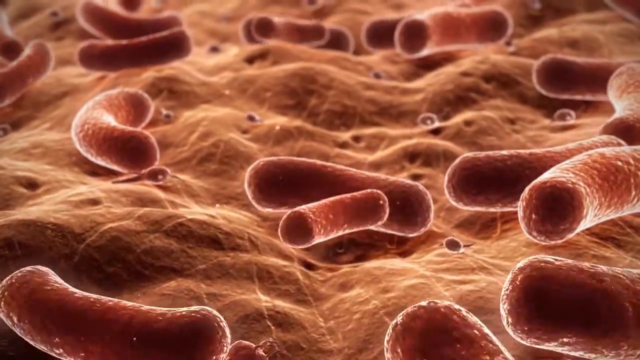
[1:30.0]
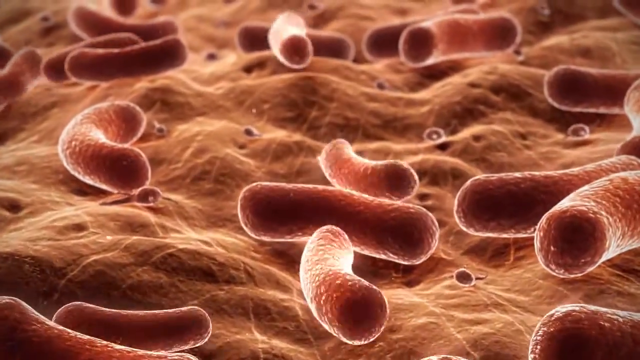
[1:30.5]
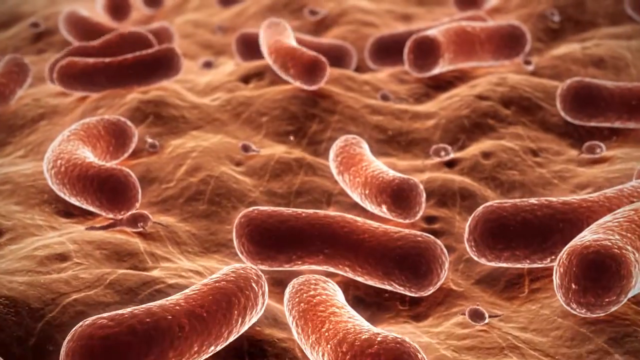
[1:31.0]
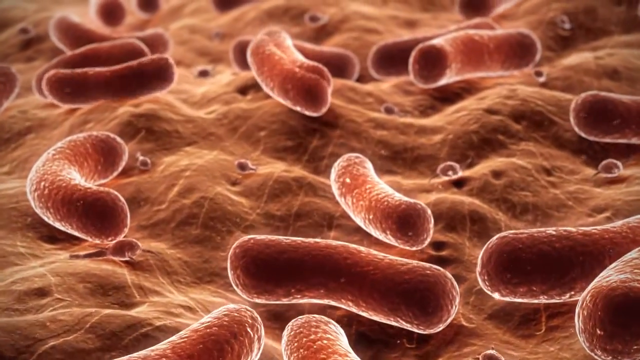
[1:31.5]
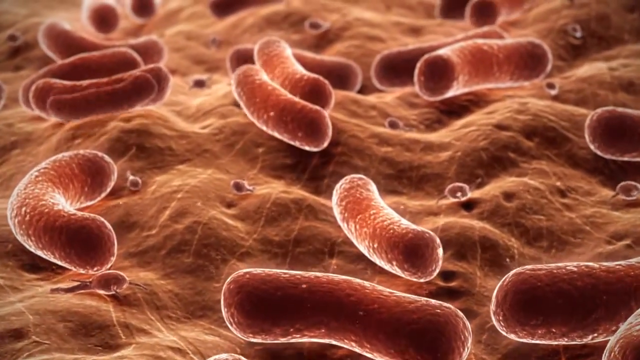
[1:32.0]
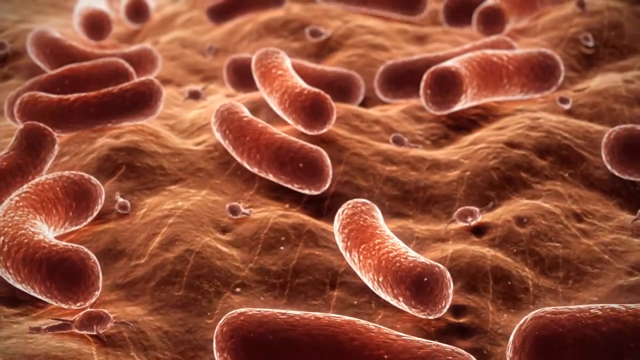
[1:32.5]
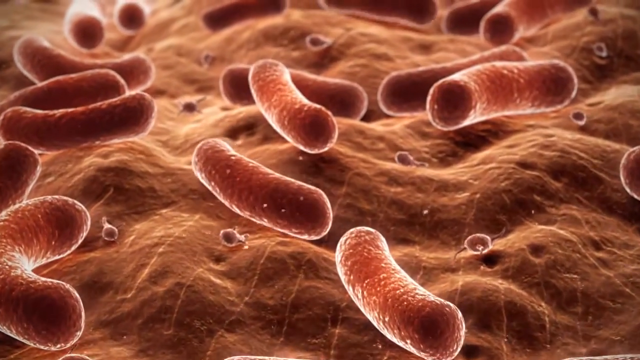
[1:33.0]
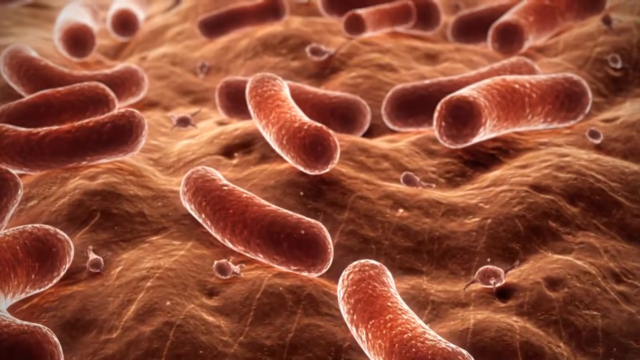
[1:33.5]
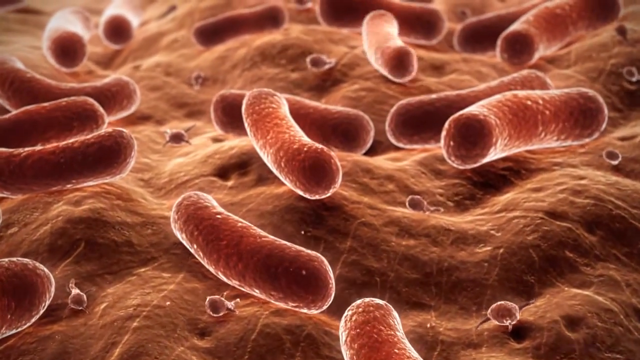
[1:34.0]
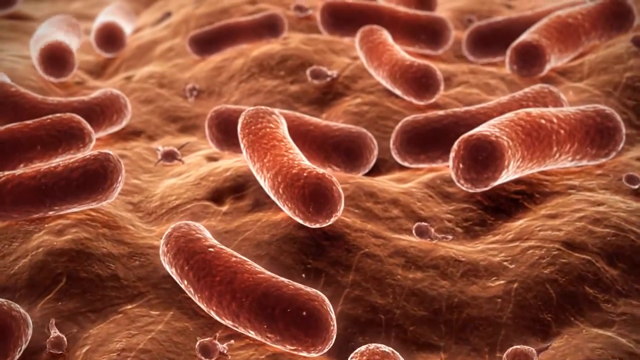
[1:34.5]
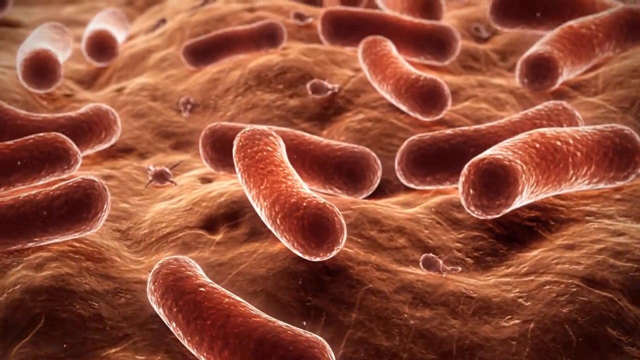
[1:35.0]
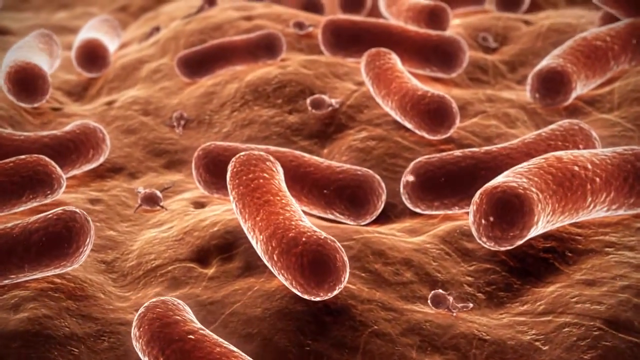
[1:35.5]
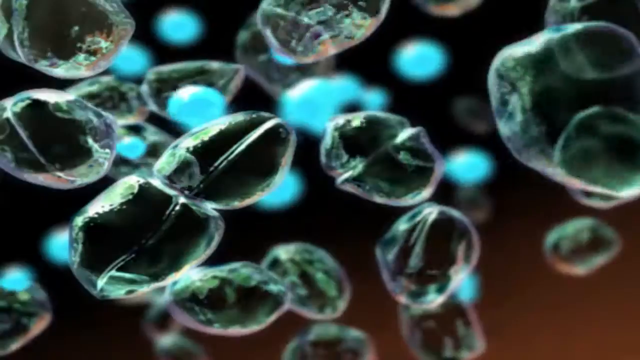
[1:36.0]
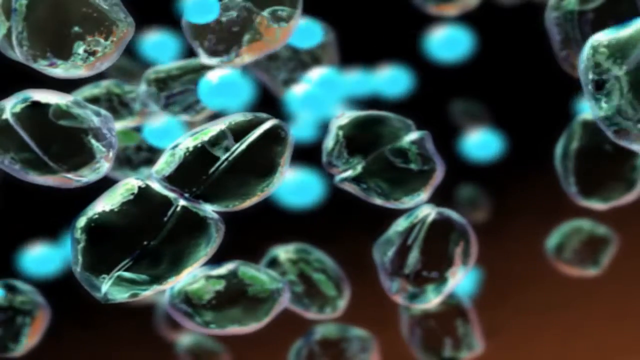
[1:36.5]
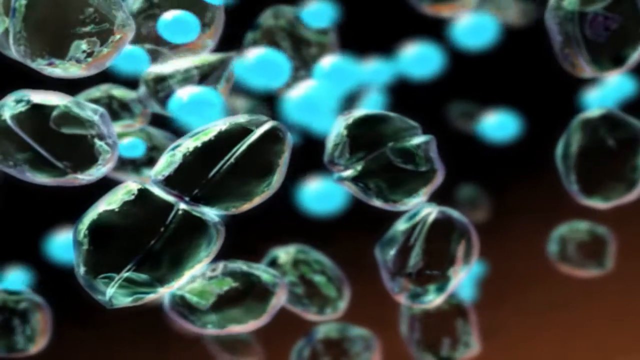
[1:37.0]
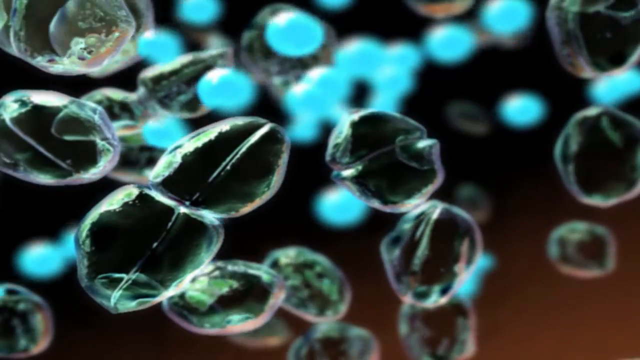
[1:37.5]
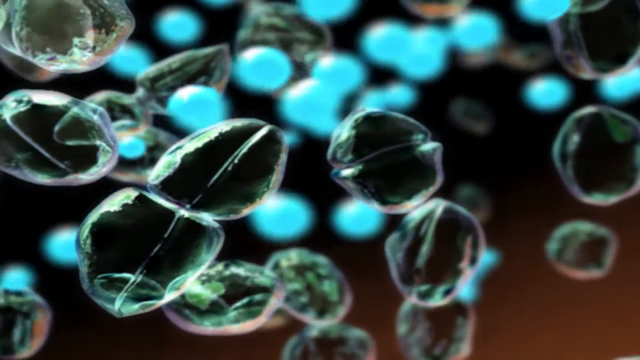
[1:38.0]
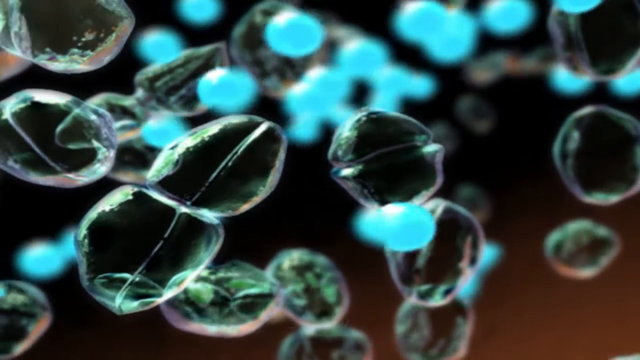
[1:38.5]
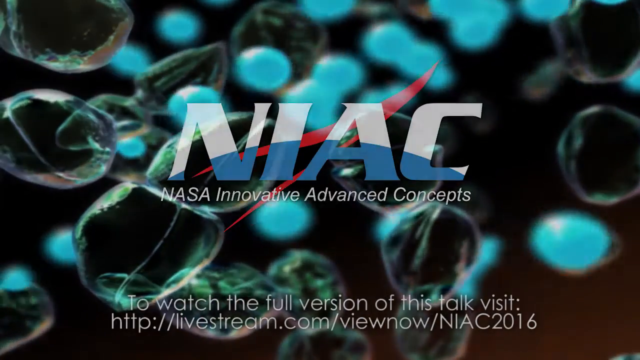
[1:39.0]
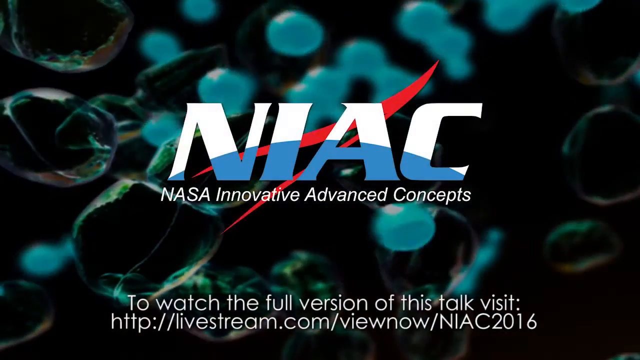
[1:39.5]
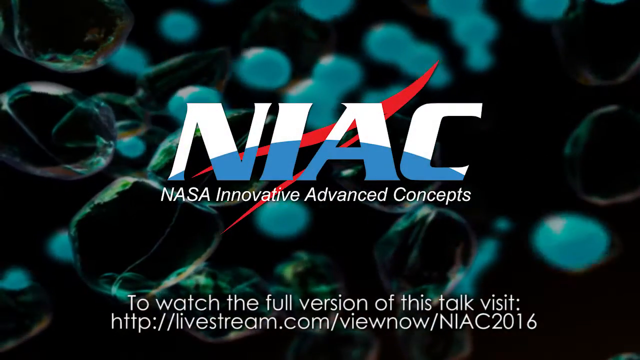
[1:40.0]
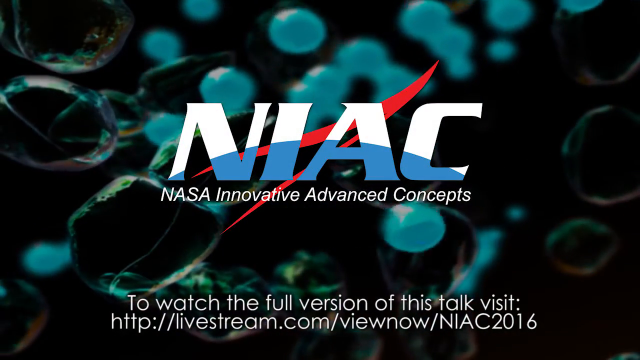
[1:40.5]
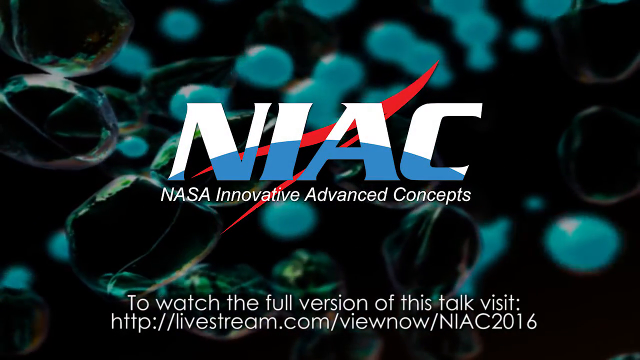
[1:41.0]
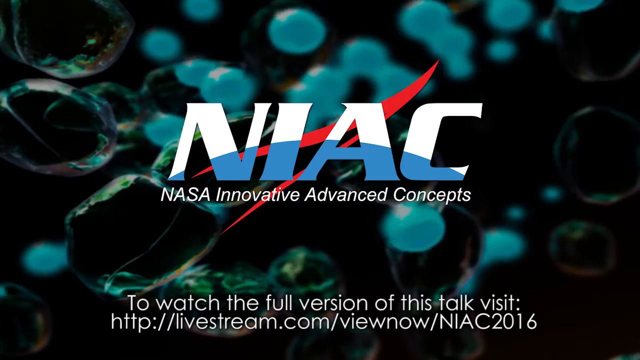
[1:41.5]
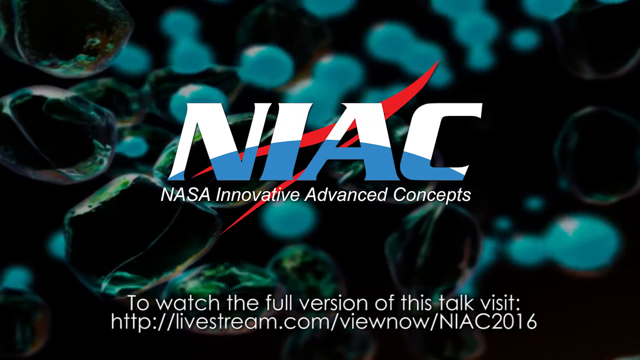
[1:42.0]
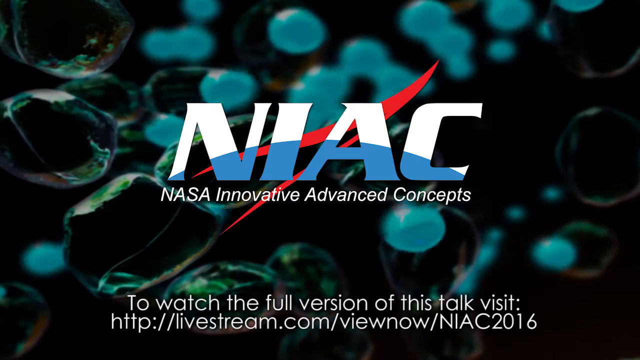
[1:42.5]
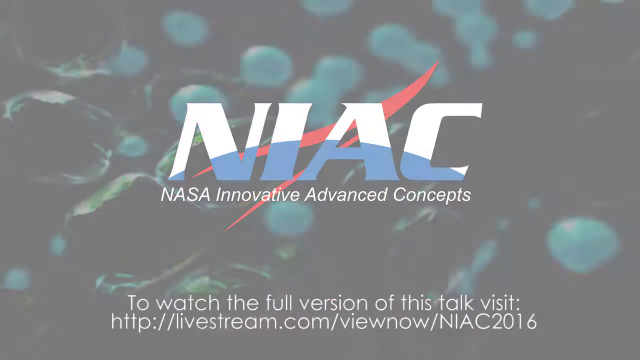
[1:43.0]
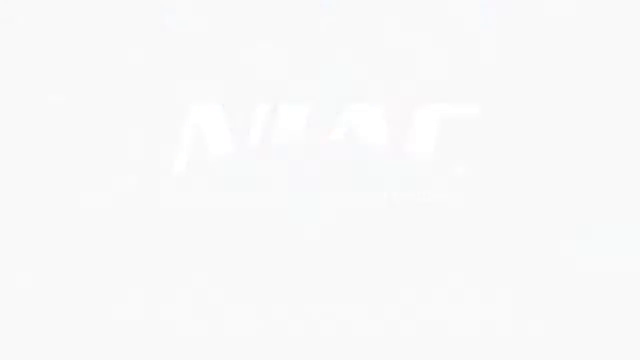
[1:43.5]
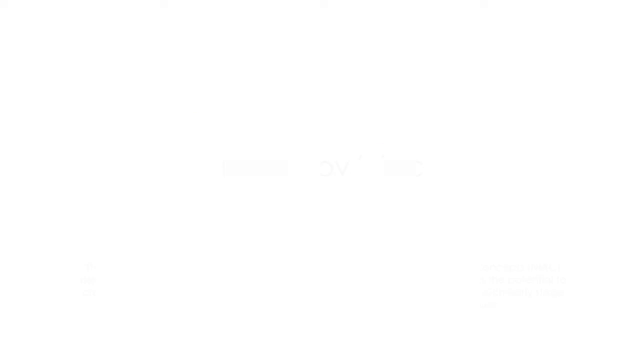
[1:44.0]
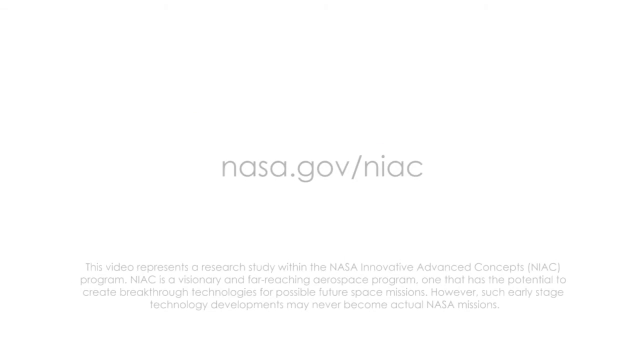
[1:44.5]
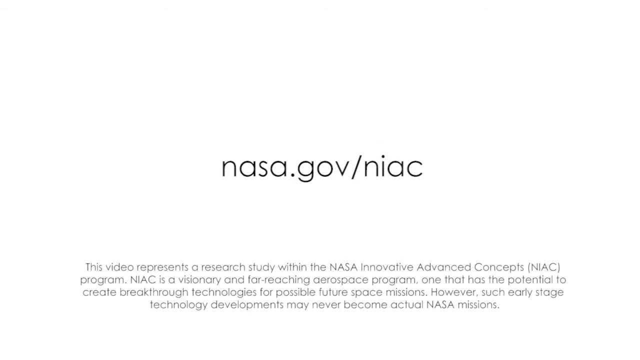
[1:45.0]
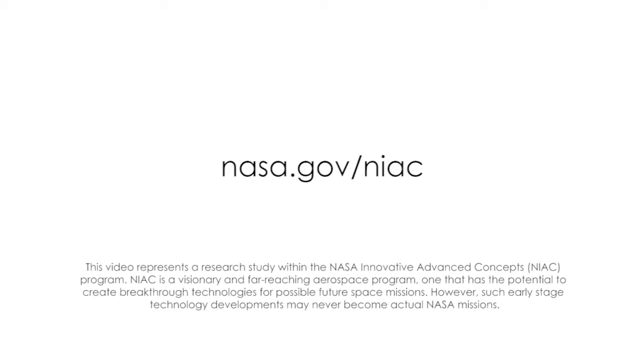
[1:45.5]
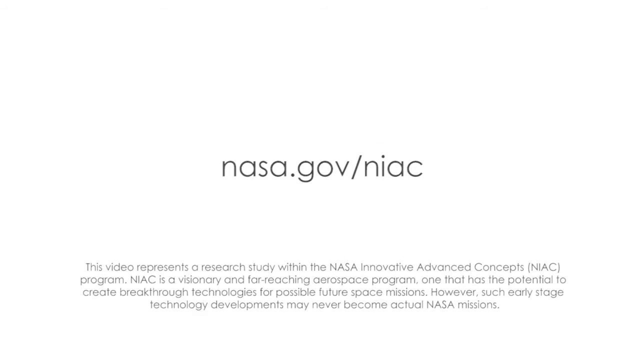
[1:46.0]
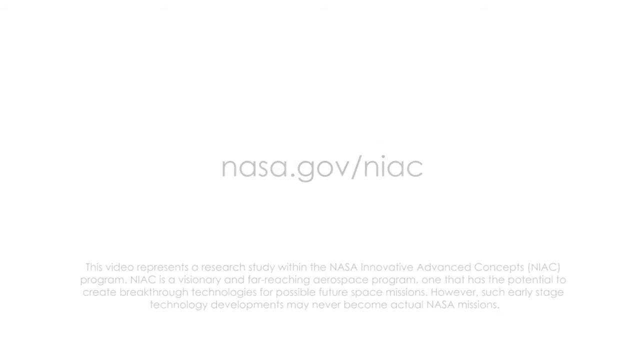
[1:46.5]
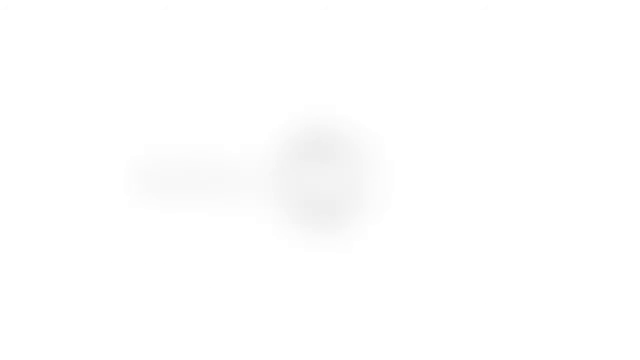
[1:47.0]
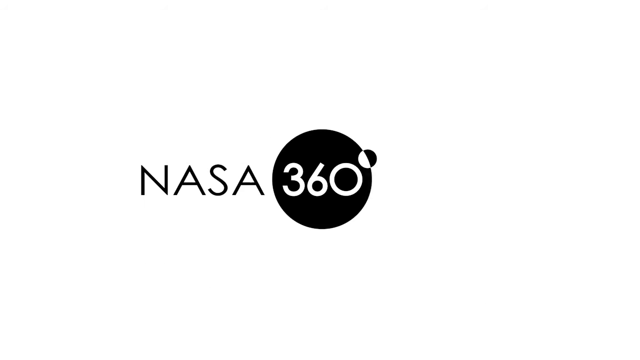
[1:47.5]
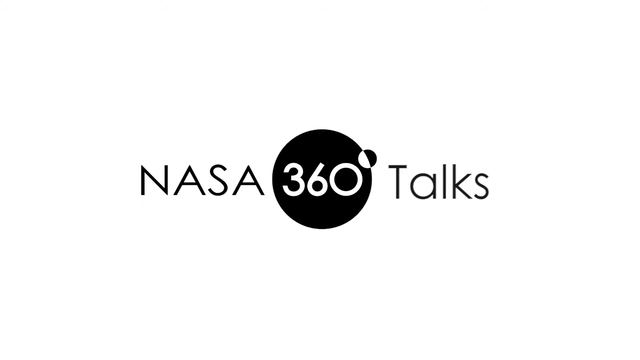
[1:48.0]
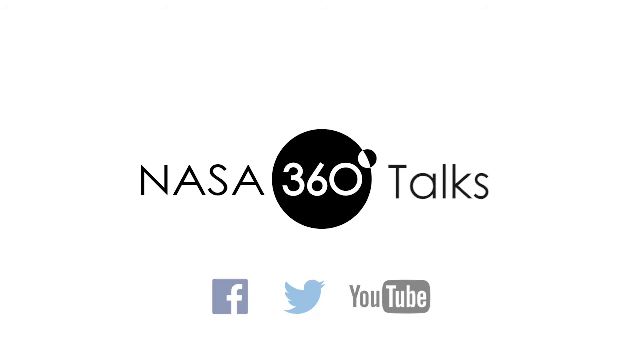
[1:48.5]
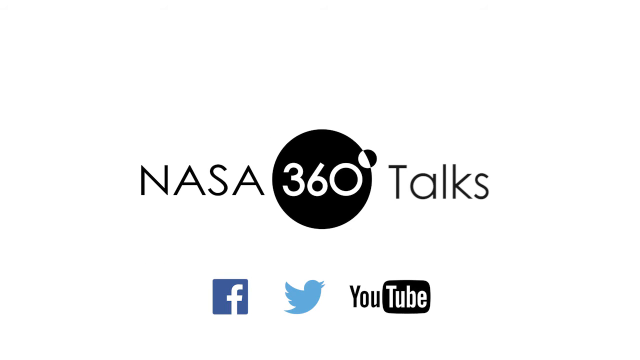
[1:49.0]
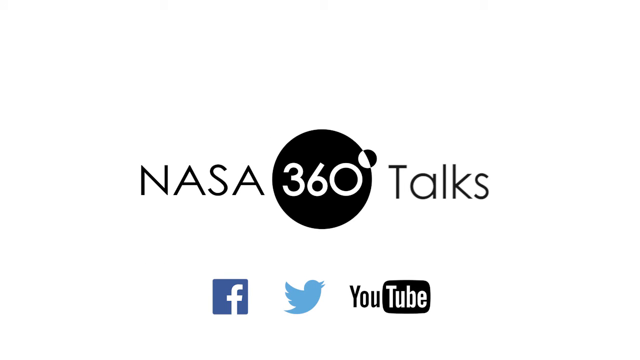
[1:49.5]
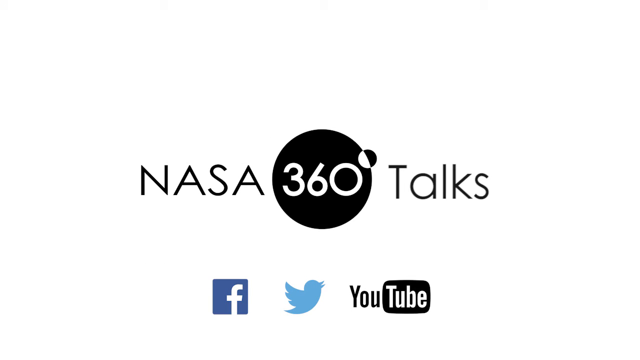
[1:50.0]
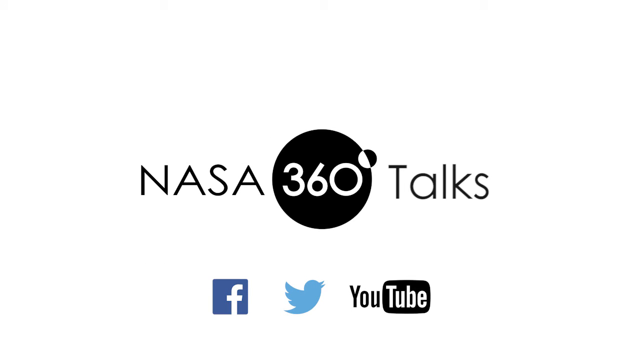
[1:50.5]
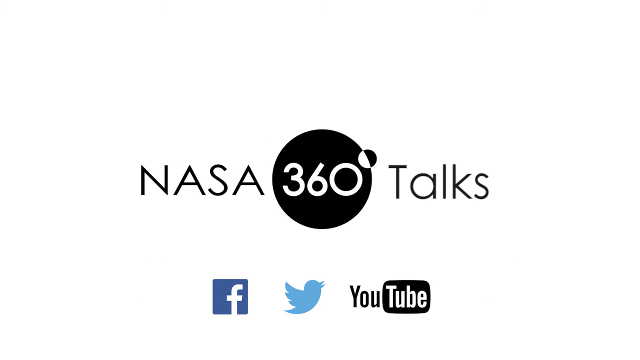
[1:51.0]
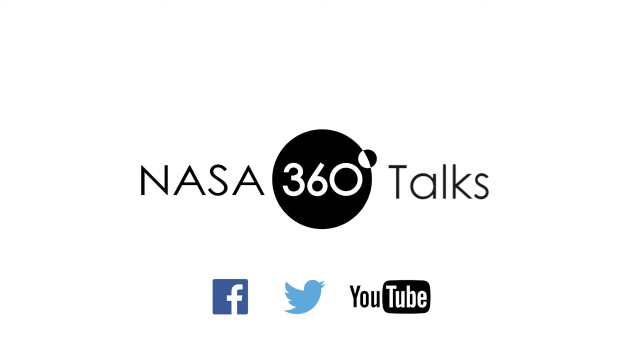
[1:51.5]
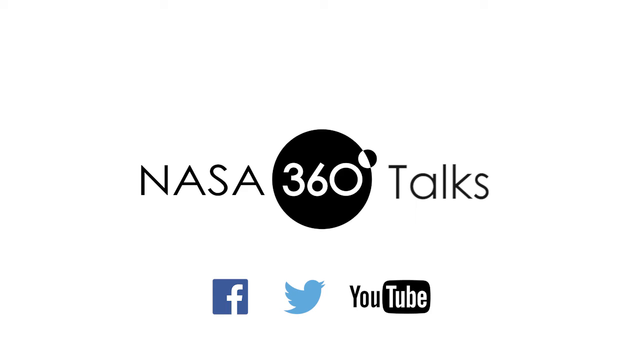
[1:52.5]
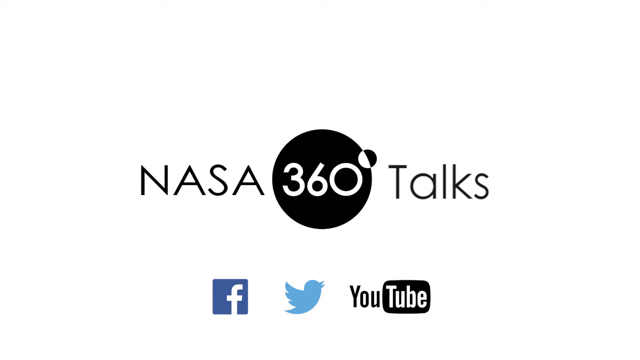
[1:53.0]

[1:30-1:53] A 3D render shows various brown, cylindrical, bacteria-like objects above a bumpy brown surface; they seem to slowly replicate and jiggle, moving around like snakes. It cuts to a 3D render of large, oval-shaped, semi-transparent green objects, with blue circles flying past them in the background. A logo then appears that reads "NIAC, NASA Innovative Advanced Concepts." At the very bottom of the screen, text reads "To watch the full version of this talk, visit http://livestream.com." The screen flashes white, and more text appears on a white title card: "NASA.gov/NIC. This video represents a research study within the NASA Innovative Advanced Concepts NIAC program. NIAC is a visionary and far-reaching aerospace program, one that has the potential to create breakthrough technology for possible future space missions. However, such early stage technology developments may never become actual NASA missions."